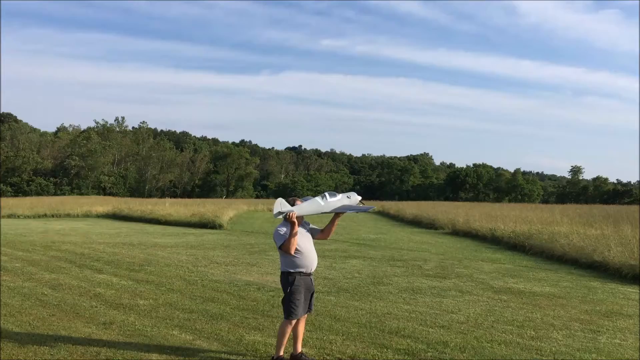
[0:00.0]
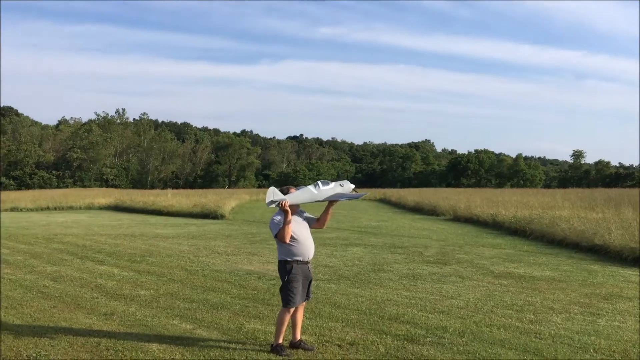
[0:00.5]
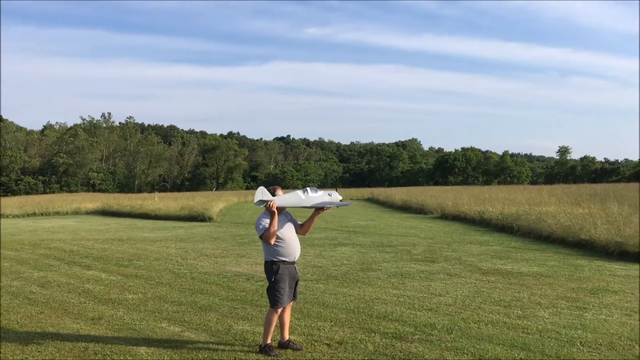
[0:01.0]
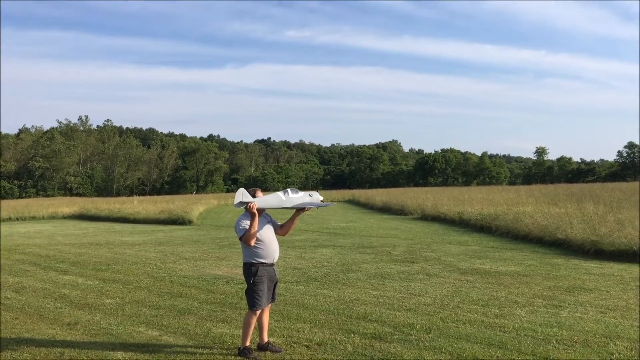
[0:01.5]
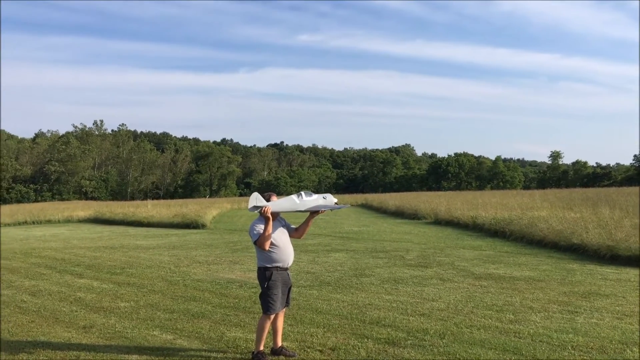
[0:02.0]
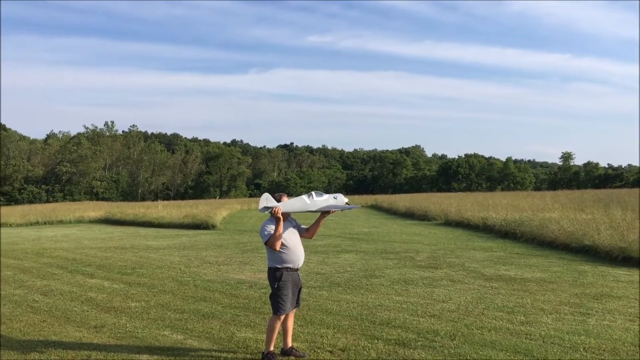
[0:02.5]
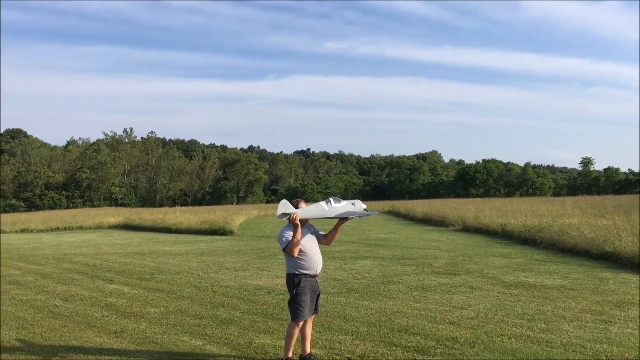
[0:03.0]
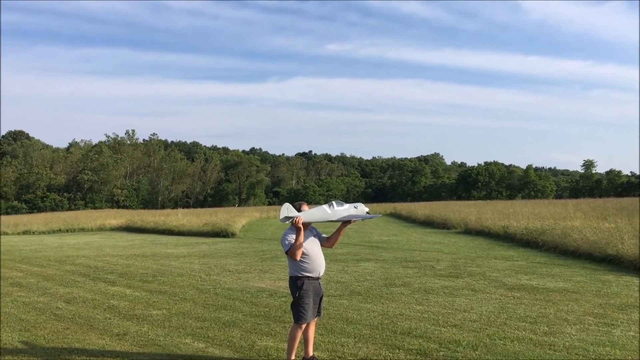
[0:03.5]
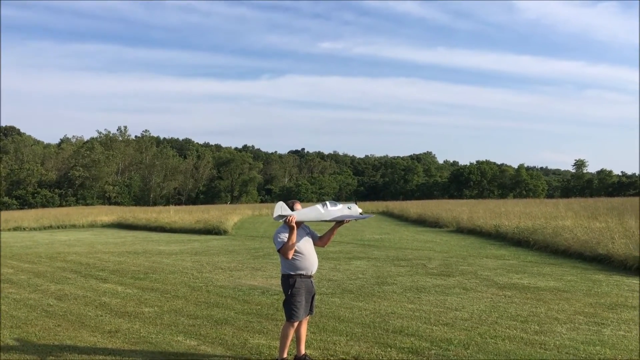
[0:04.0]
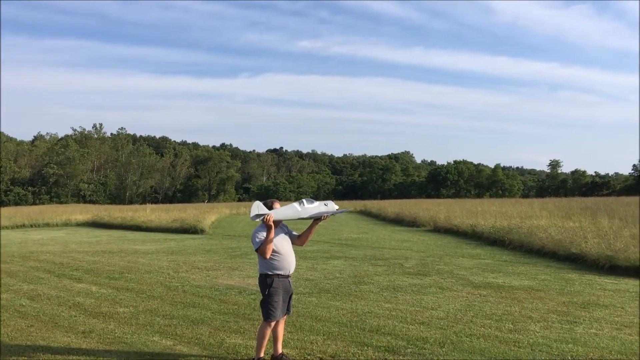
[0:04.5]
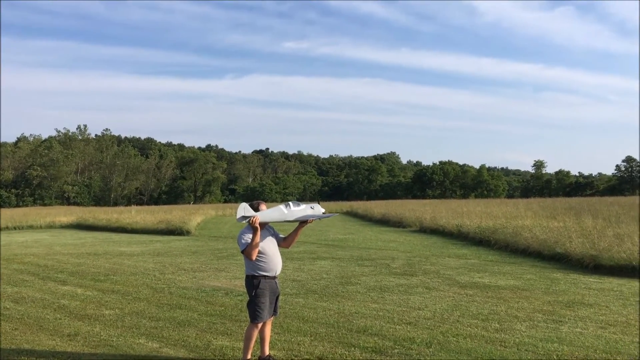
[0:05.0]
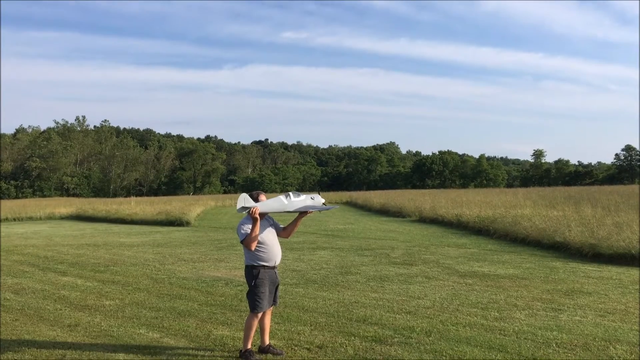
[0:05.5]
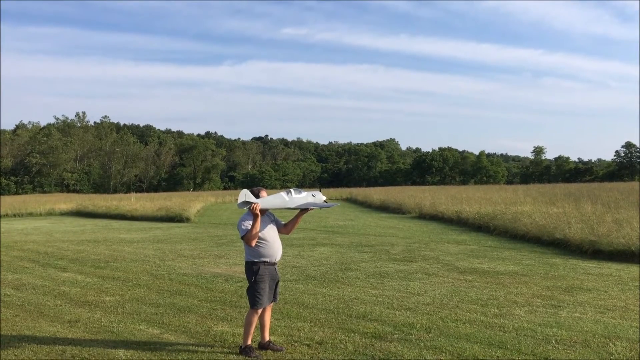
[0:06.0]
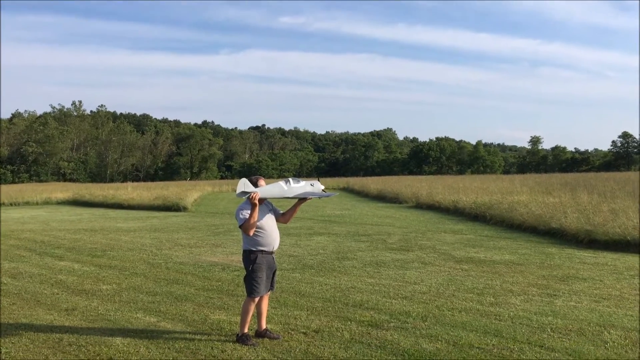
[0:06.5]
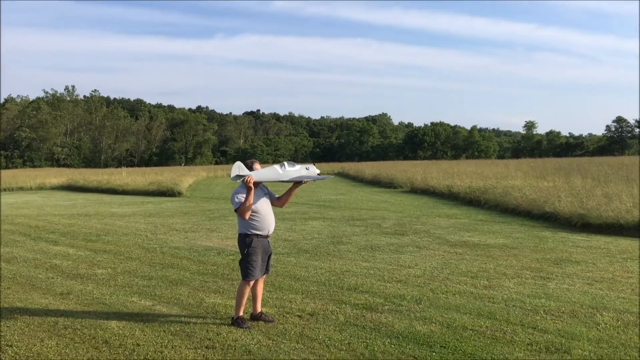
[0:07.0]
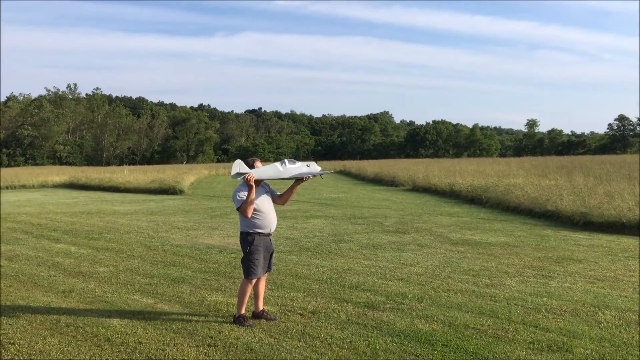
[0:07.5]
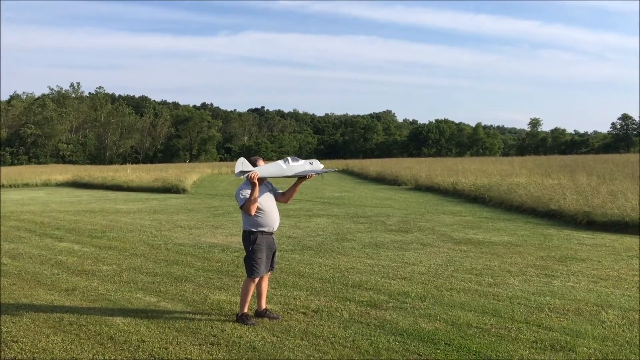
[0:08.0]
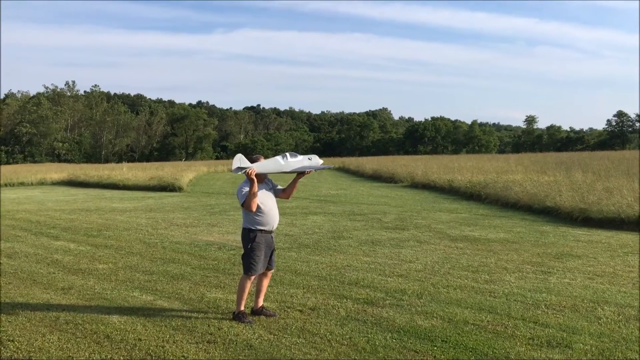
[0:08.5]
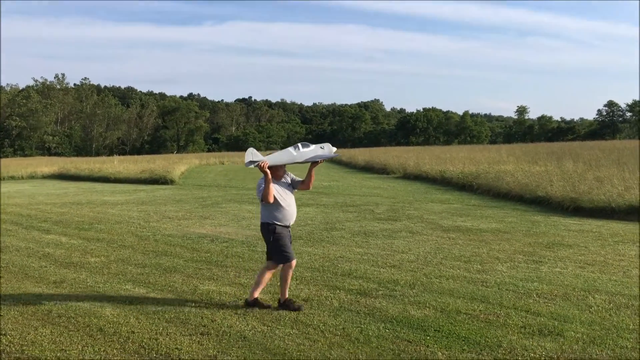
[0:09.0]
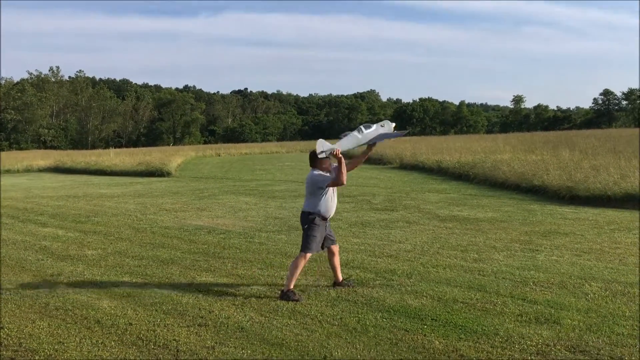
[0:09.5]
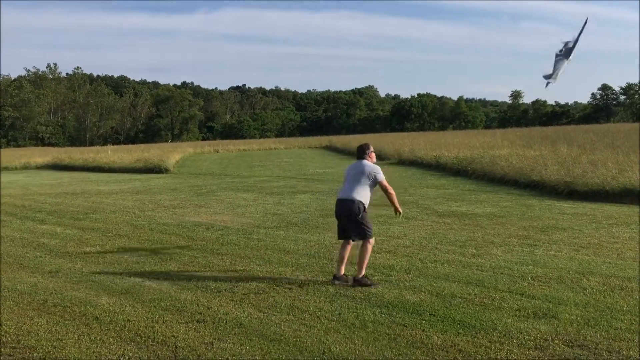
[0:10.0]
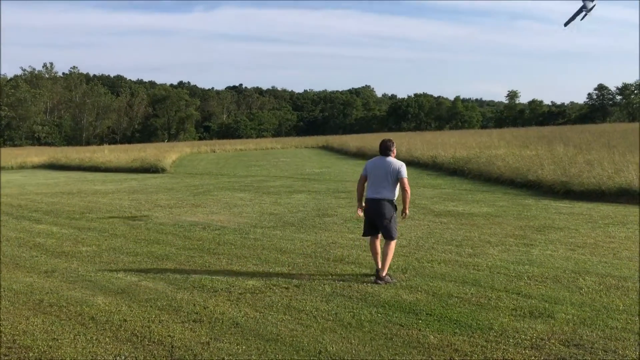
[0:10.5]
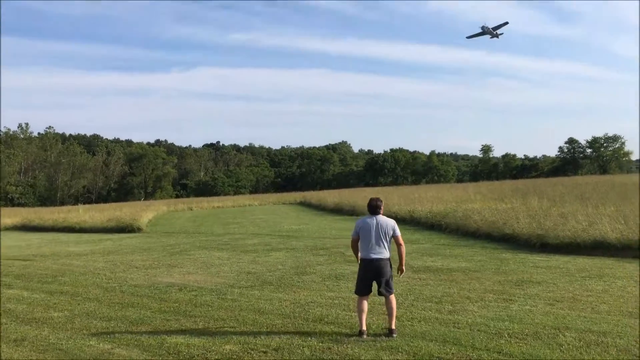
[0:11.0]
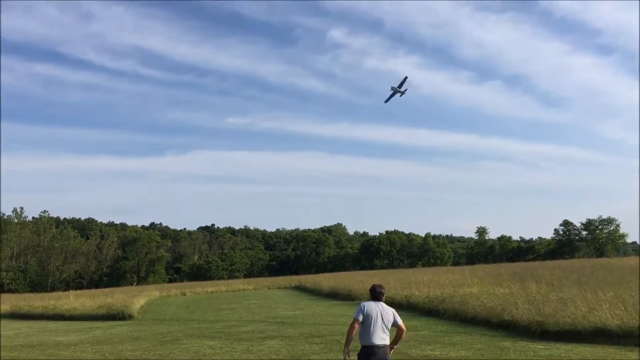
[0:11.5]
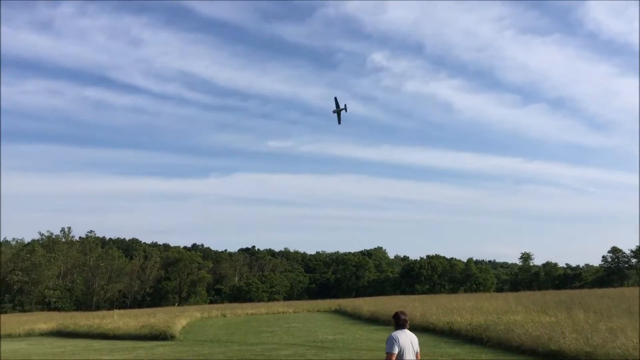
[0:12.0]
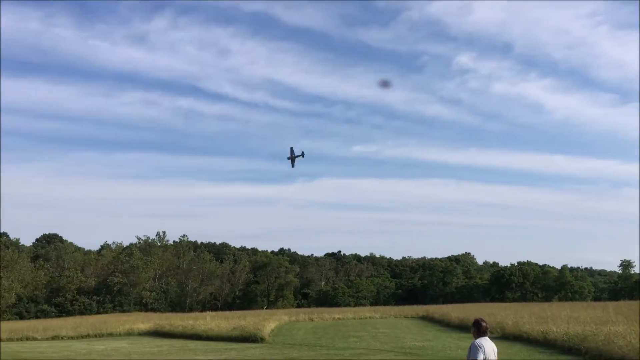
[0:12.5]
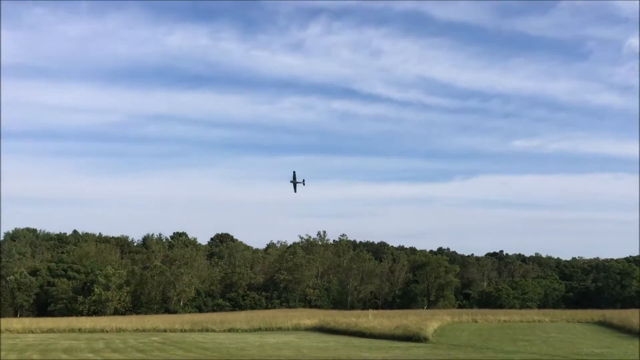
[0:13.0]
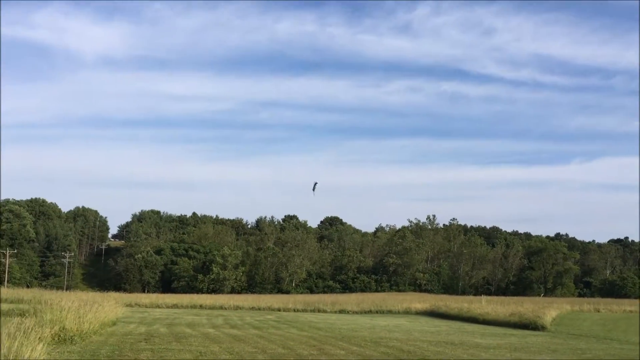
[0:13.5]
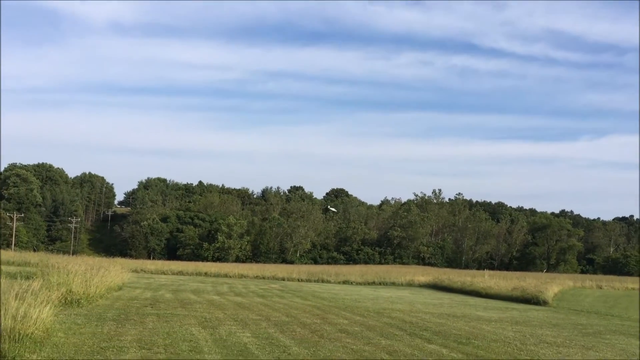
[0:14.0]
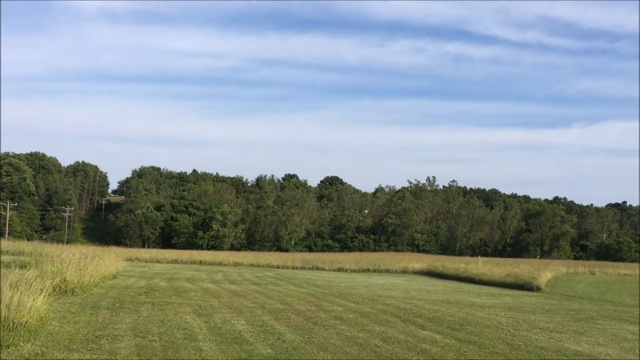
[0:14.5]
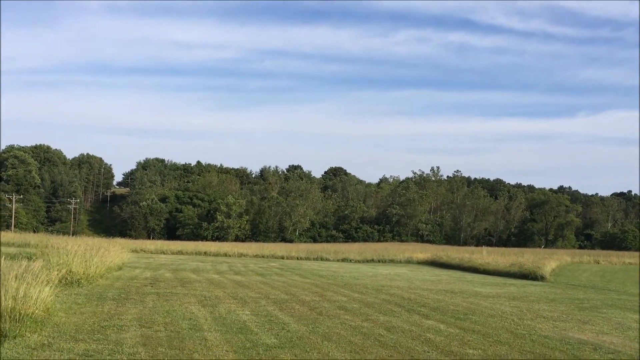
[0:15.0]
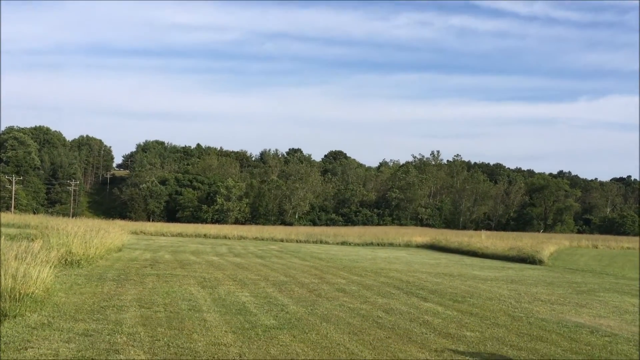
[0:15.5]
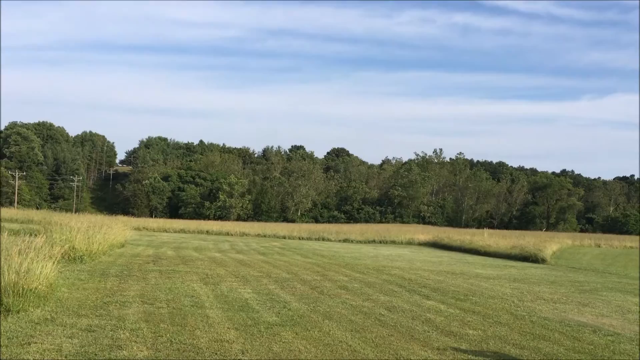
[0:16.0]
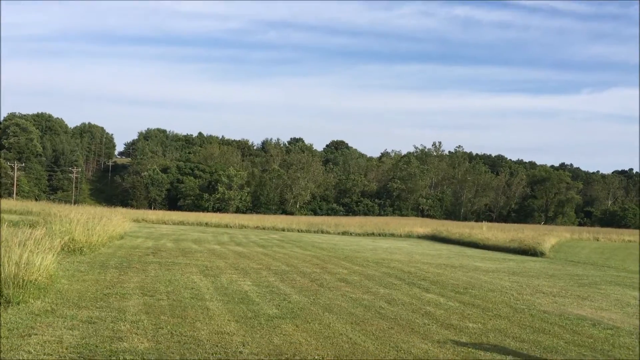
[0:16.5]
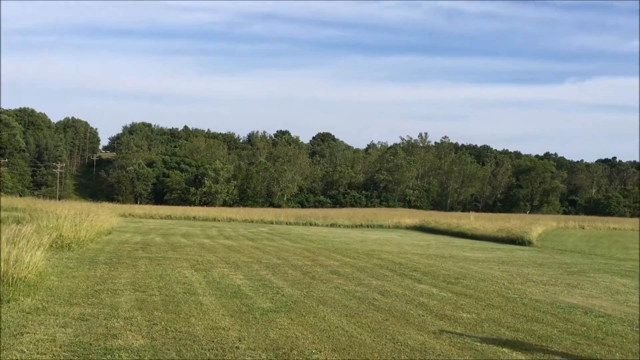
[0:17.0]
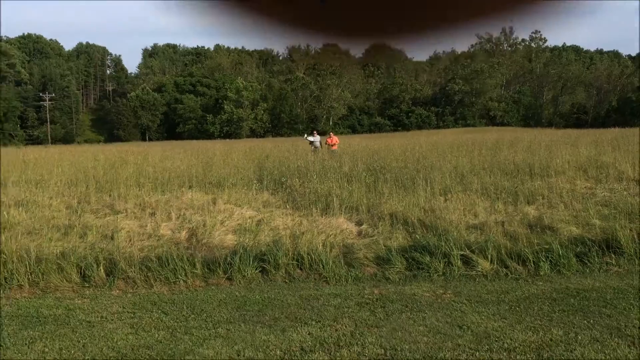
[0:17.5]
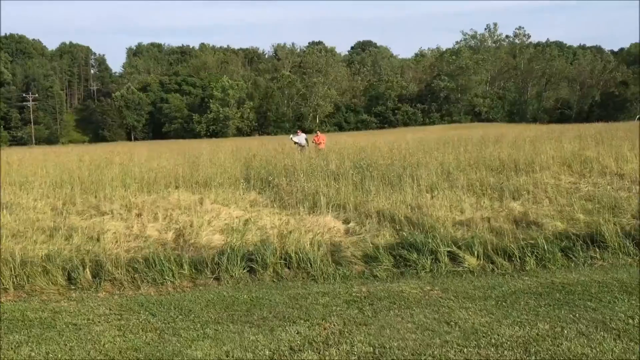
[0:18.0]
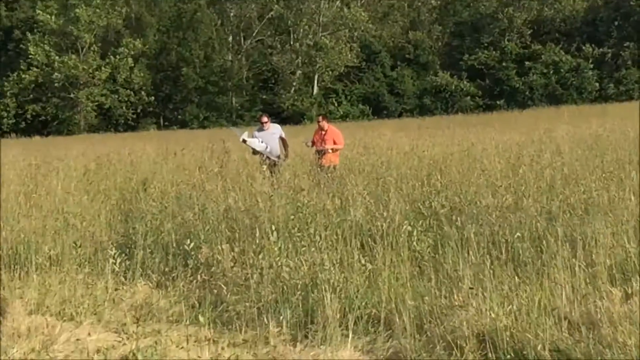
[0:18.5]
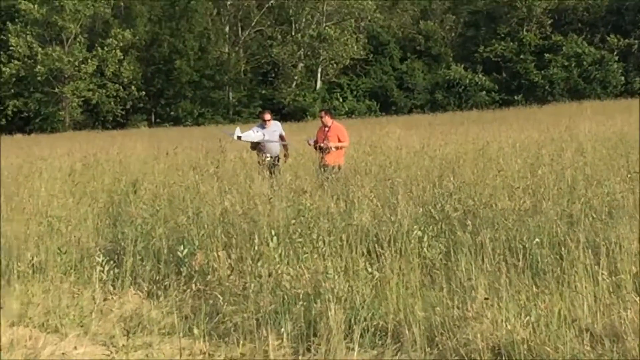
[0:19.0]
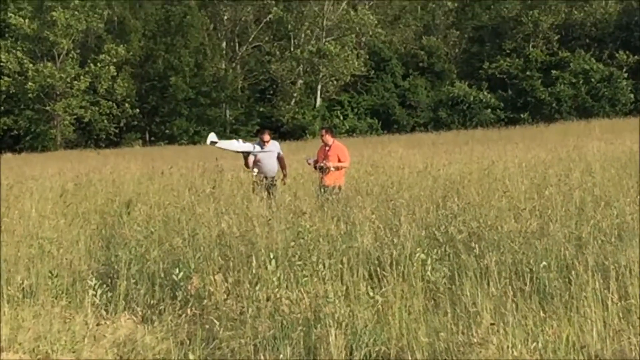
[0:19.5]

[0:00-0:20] A person stands on a field of cut grass, with big trees in the background and a sky with some clouds. He holds a small airplane in his hands and wears a gray t-shirt and short pants. The camera is focused on this man as he shows the airplane, and the airplane goes up into the sky but then lands on some grass in part of the field. Afterward, he takes the airplane out of the grass.